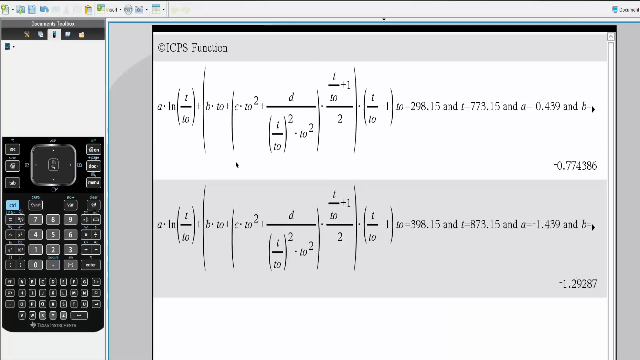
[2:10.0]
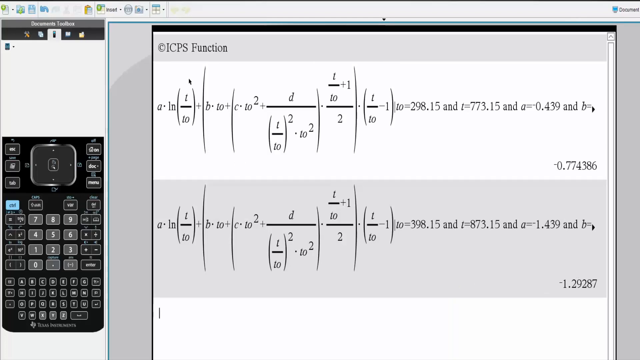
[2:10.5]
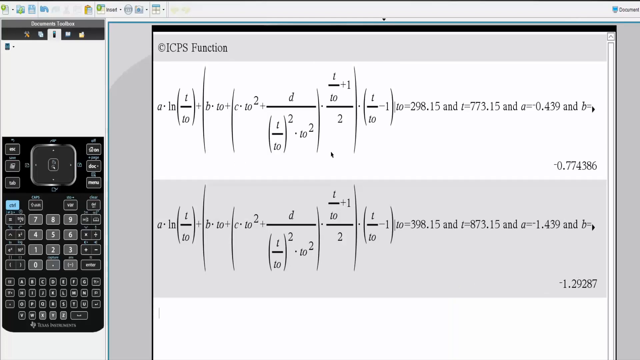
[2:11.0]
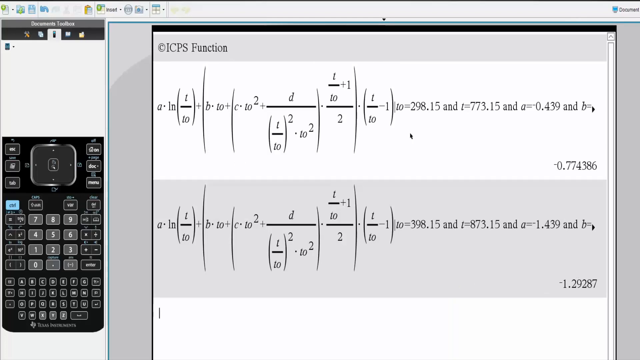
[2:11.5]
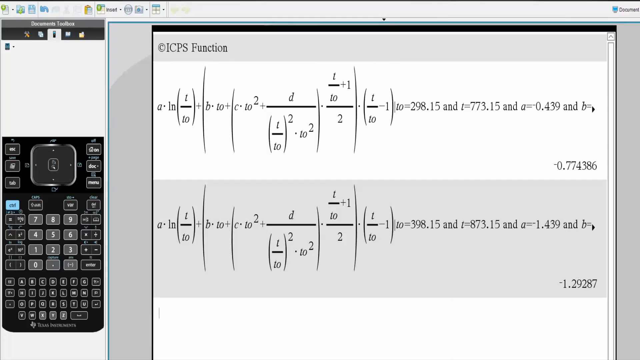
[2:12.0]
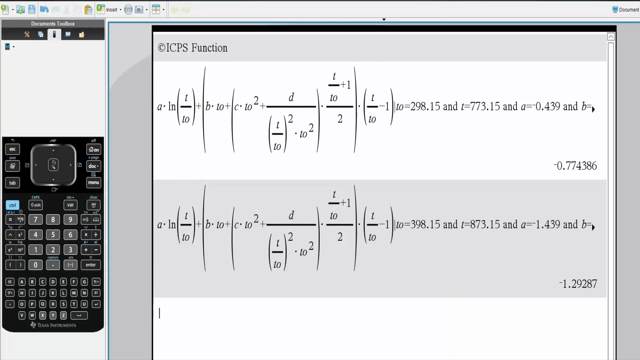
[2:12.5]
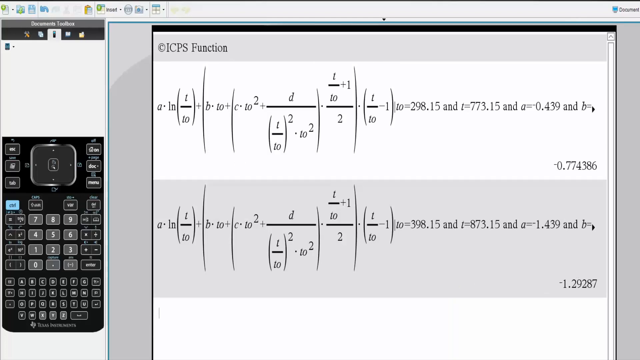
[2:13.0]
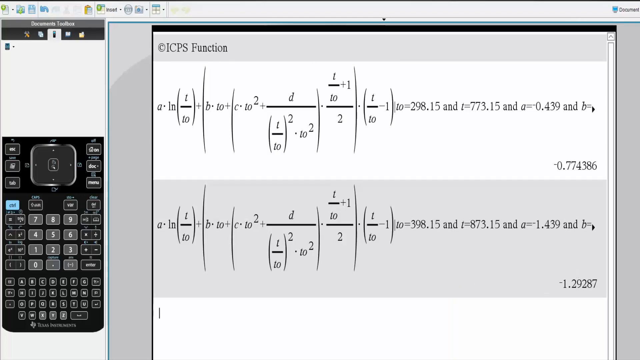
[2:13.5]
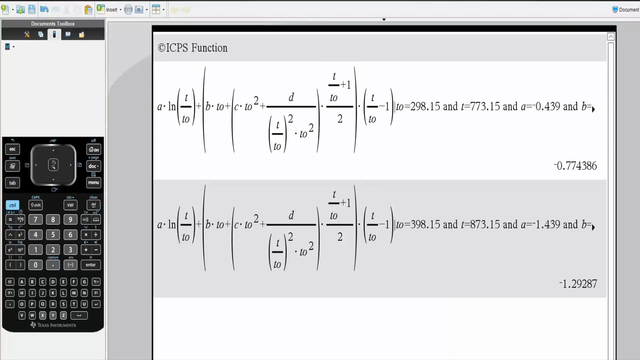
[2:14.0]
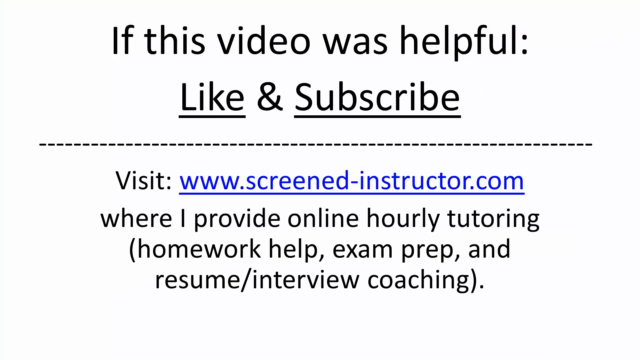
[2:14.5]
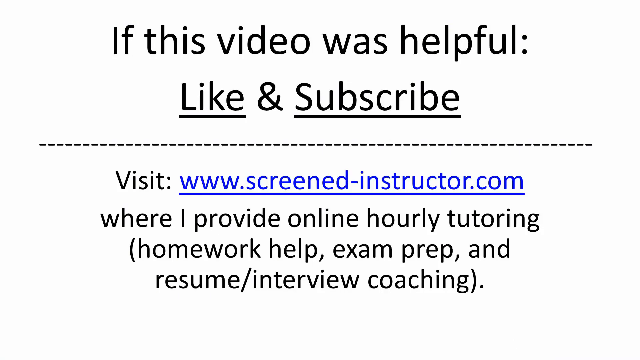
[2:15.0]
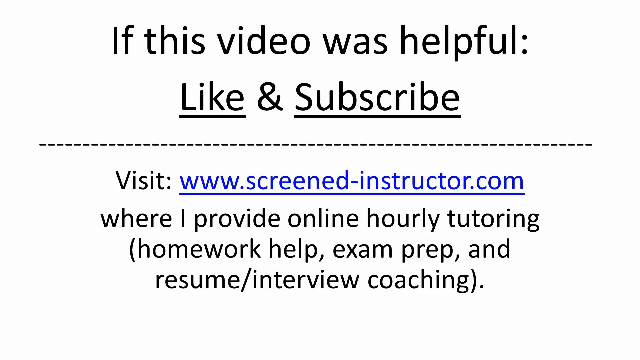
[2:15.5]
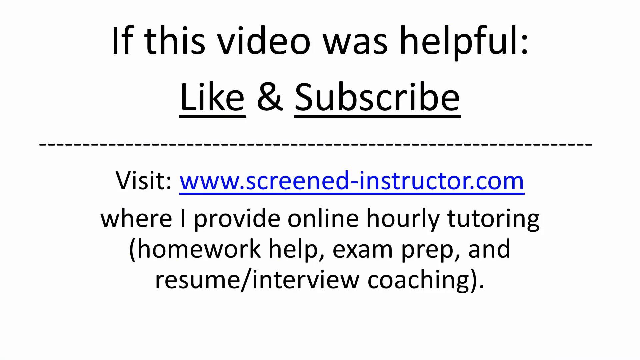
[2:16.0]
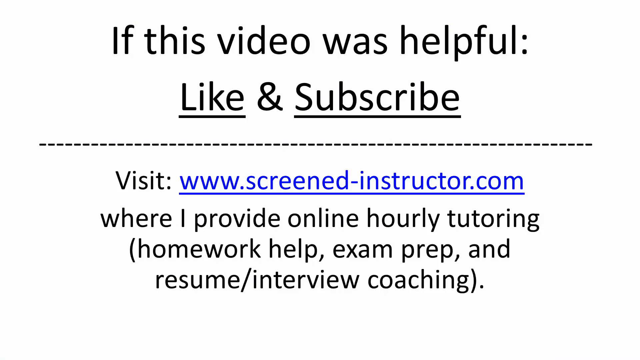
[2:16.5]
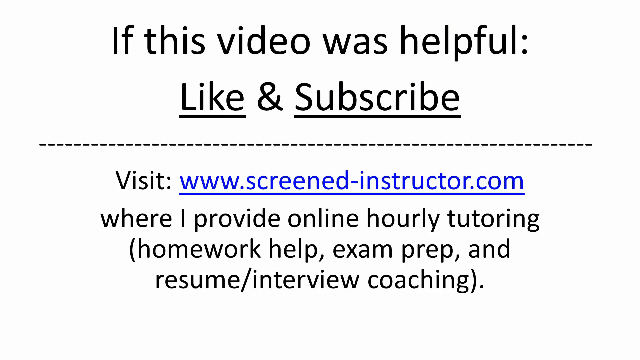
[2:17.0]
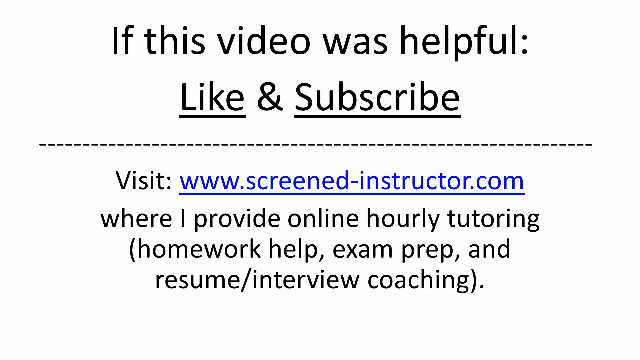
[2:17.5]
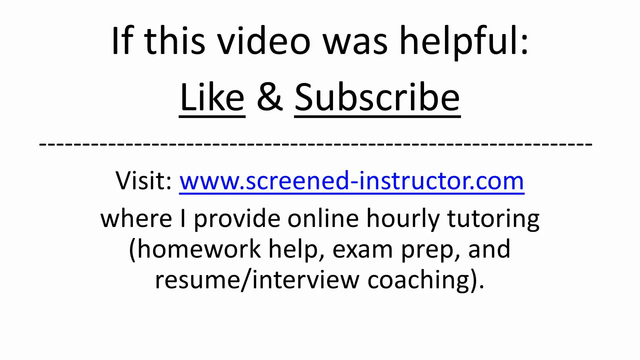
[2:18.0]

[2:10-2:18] The calculator application is on the left-hand side and the notepad application on the right-hand side; both appear to be contained within the same program, though they look and feel quite different. On the right-hand side, the big formula has apparently been copied and pasted down below, so the same formula appears twice. T0 is 298.15 in the top formula and 398.15 in the bottom one, and the other variables are changed as well. The answer to the first function is -0.774 and the answer to the second is -1.29.